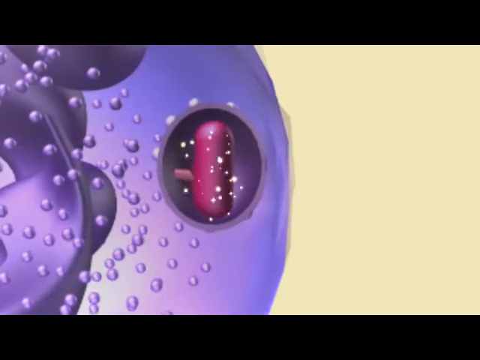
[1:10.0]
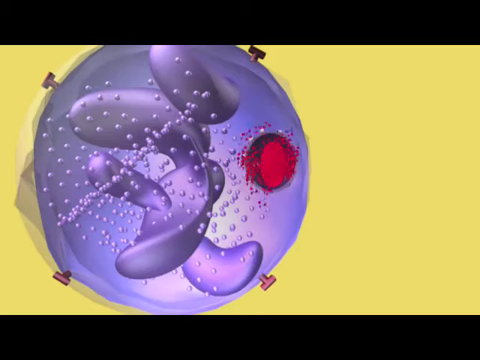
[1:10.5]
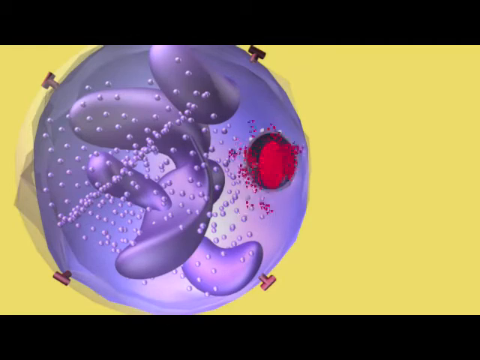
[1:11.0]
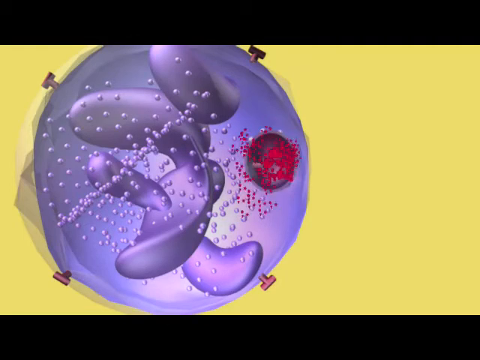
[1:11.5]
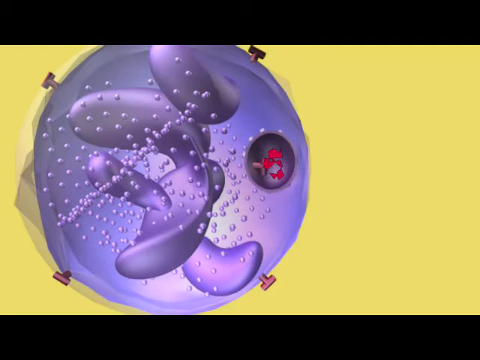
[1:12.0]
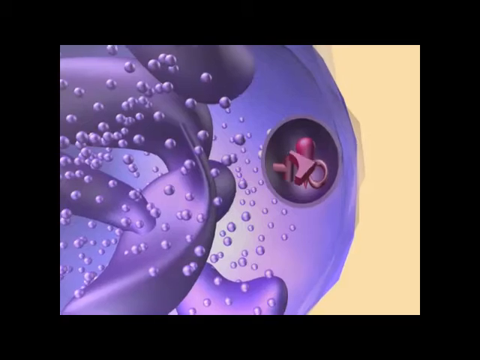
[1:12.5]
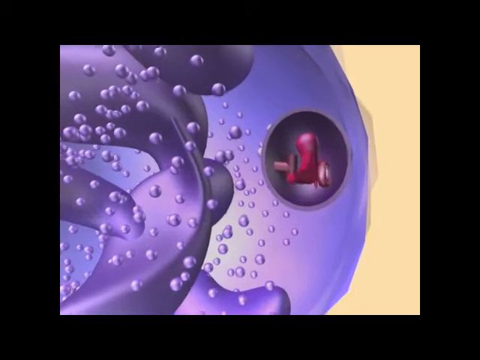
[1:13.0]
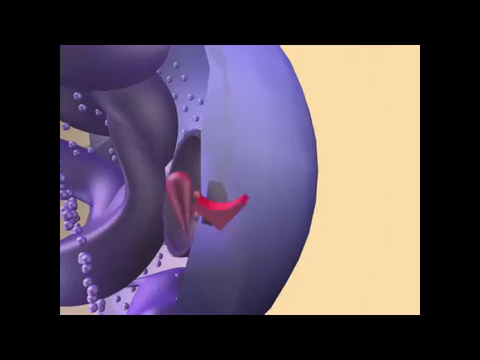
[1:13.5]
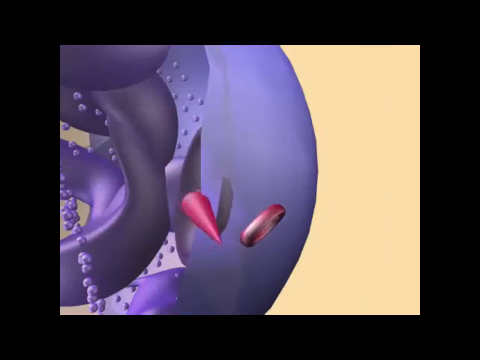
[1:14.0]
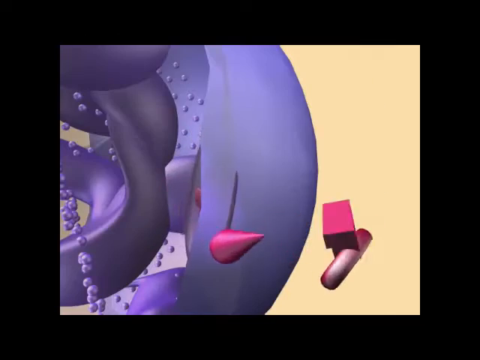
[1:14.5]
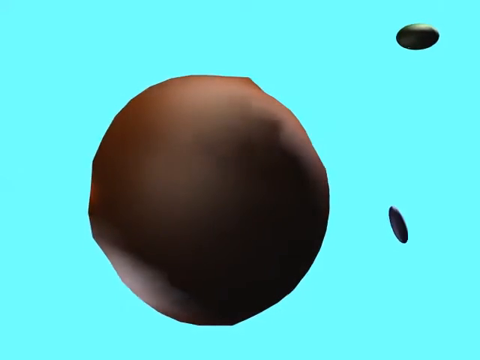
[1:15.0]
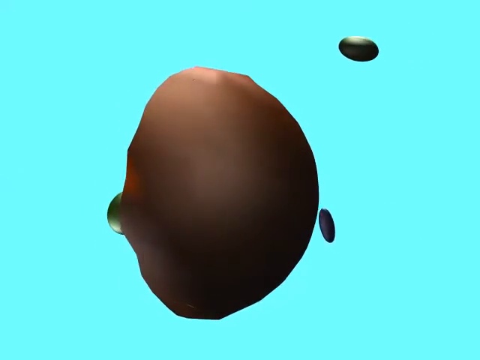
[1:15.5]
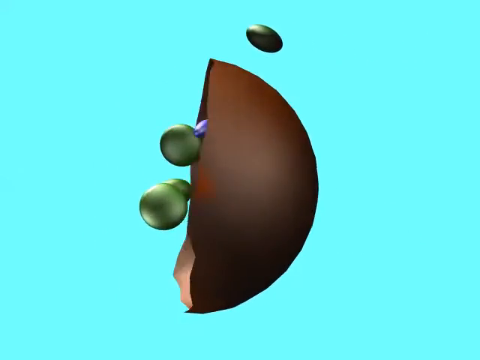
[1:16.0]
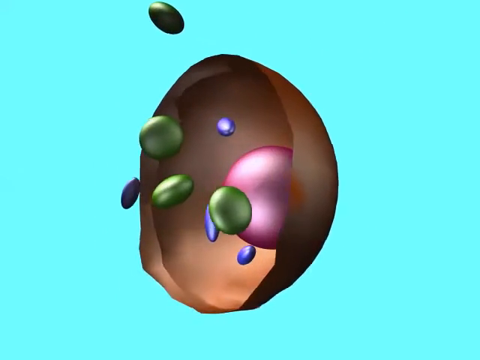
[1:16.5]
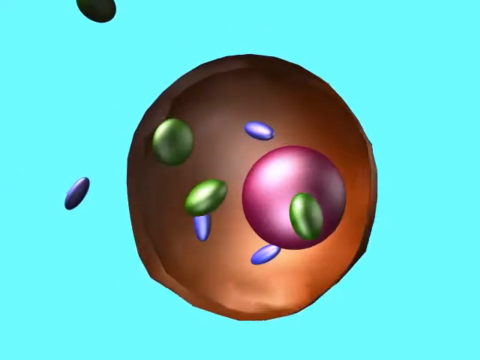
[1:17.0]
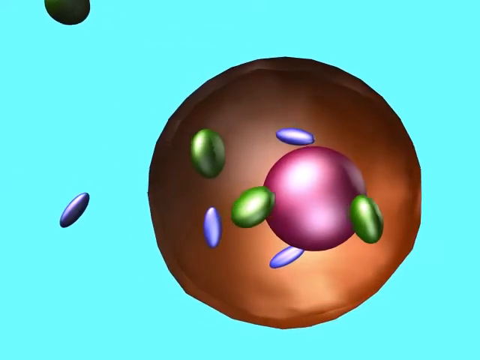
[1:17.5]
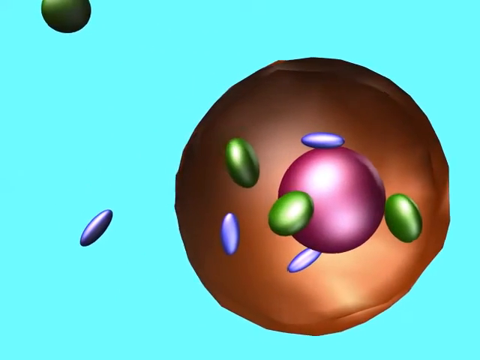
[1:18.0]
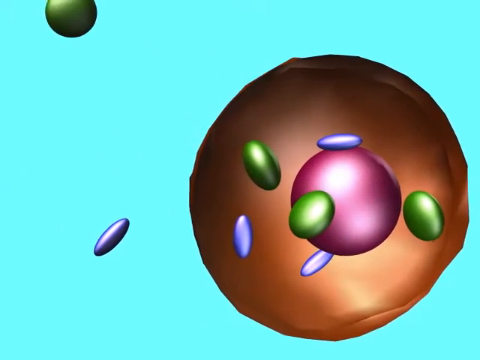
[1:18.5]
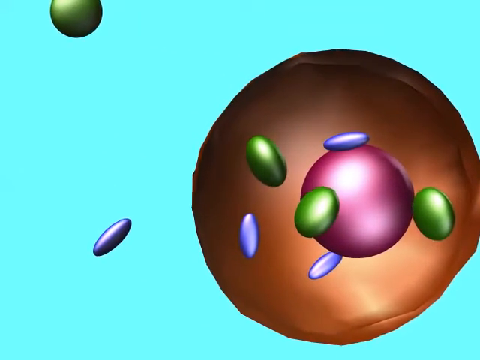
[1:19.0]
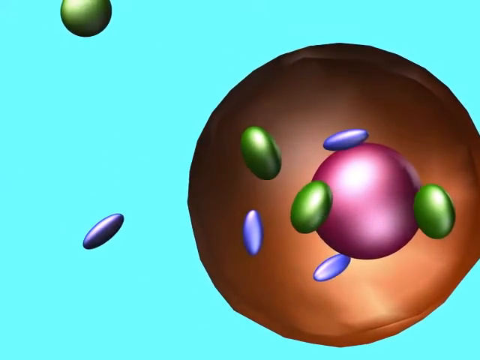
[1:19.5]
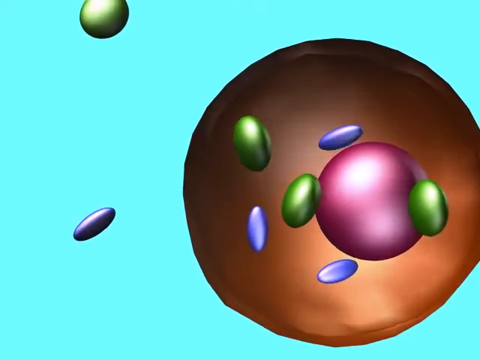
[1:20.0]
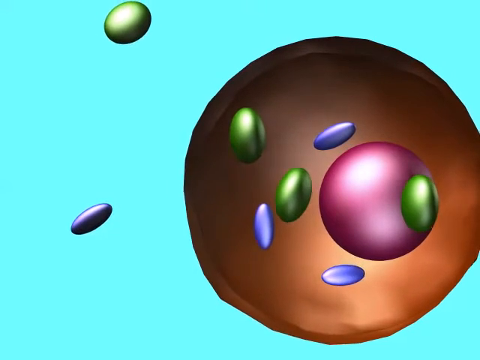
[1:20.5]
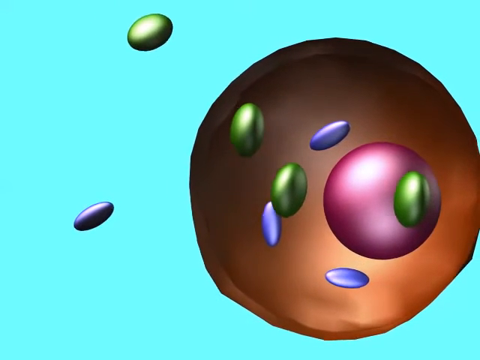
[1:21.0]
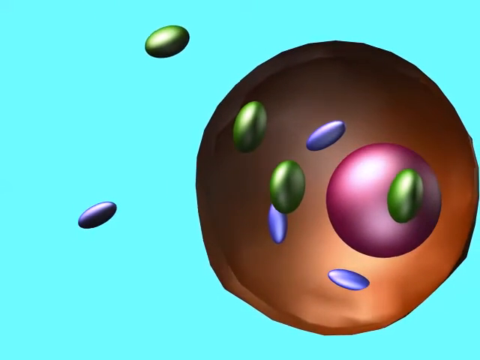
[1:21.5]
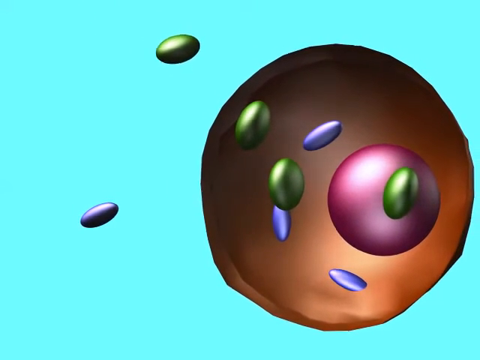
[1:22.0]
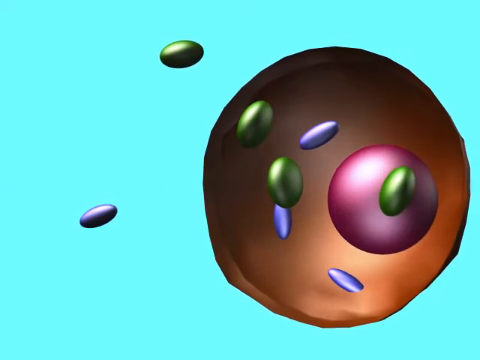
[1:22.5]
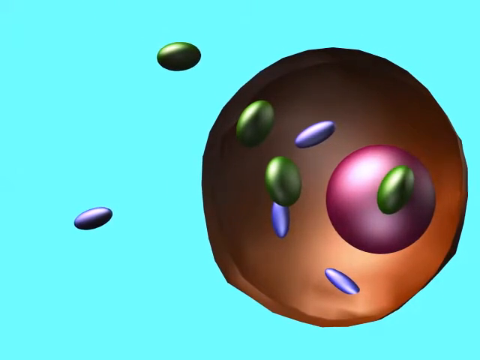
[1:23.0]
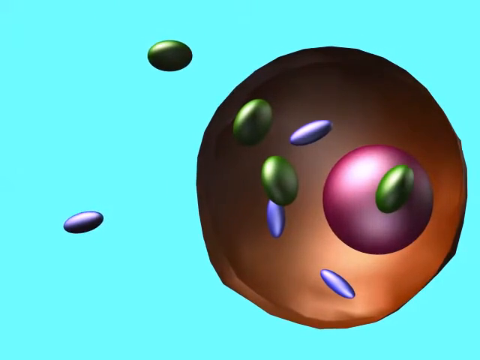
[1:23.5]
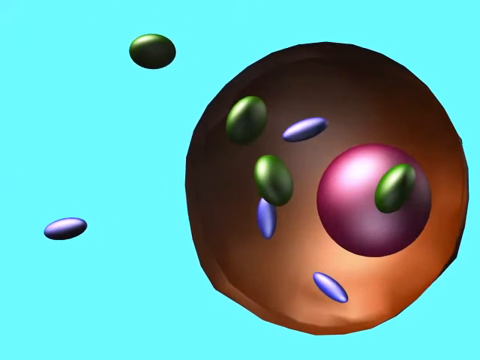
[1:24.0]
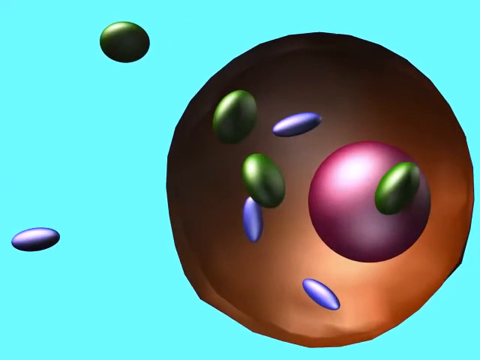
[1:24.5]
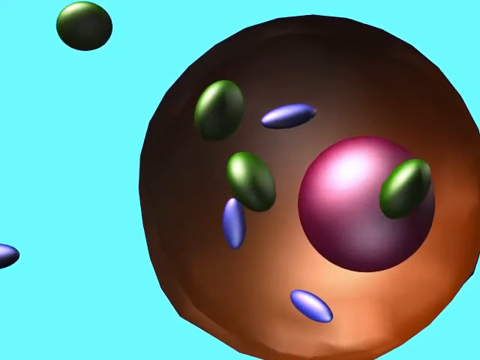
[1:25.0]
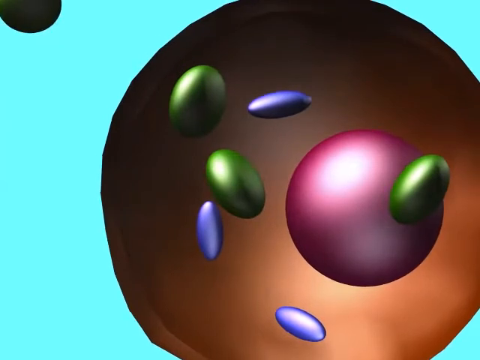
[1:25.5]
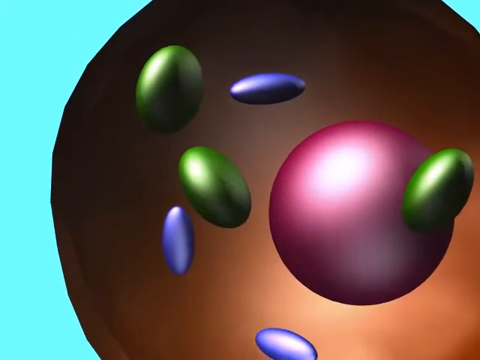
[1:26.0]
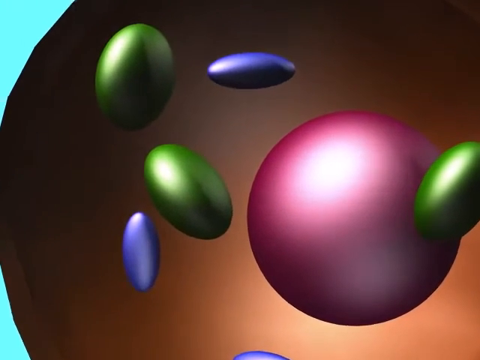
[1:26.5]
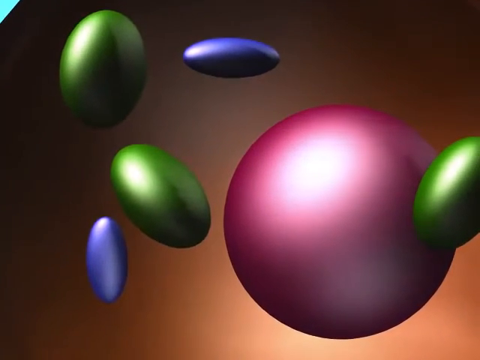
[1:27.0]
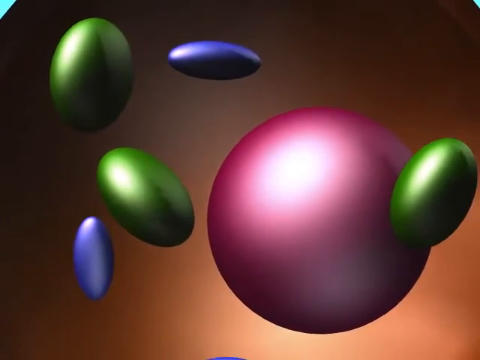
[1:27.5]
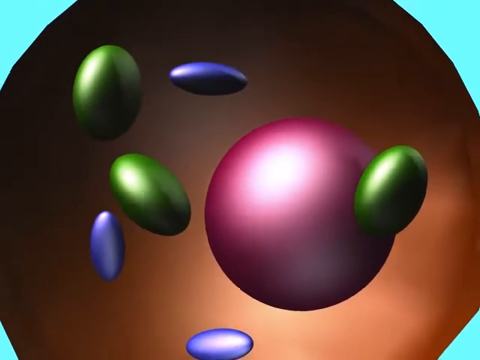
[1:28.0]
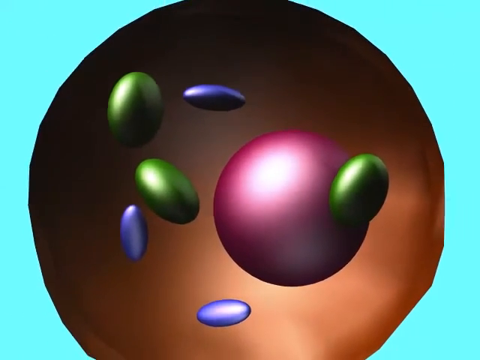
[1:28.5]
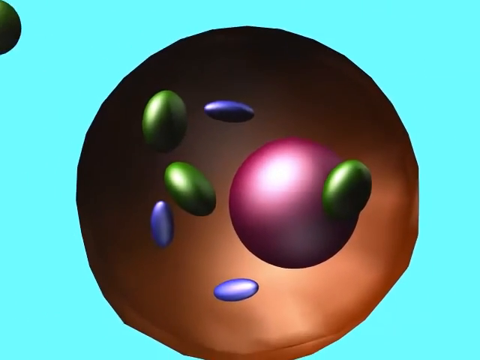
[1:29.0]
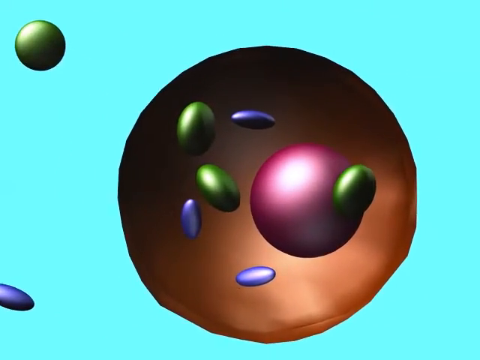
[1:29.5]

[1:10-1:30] The view stays zoomed in: the right side is tan, and on the left is the purplish-blue circle that looks like it has bubbles and little kind of lava-lamp-type liquid in it. Just inside its right edge is a little circle holding a reddish-purple pill, and the camera zooms in on it. It then zooms back out; the background is yellow and the view is still on the blue circle. On the right side, something blood red spins in a circle with little splatters coming off it all around. A little half-triangle circle and the pill appear inside the area as the camera zooms back in. The view then pops out the right side to a teal background, with a little black pill at the top and another black pill coming in from the center on the right side. A big circle is in the center, and it goes around it. As the big circle rotates forward, three green pills, three blue pills and a really big red ball are visible inside. The two pills that came from the right pass off the left side as the big circle kind of rotates over to the right. One of them turns green and comes back closer. The big circle kind of tilts around, and the camera zooms in close on it, then zooms back out, with the green one at the top and the blue one at the bottom still over on the left side.